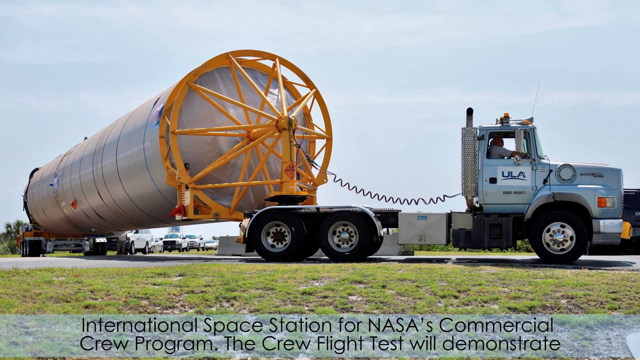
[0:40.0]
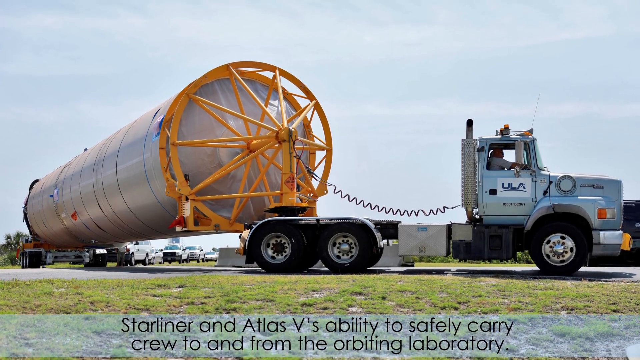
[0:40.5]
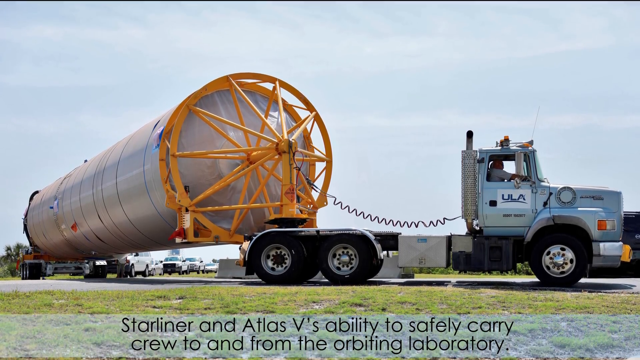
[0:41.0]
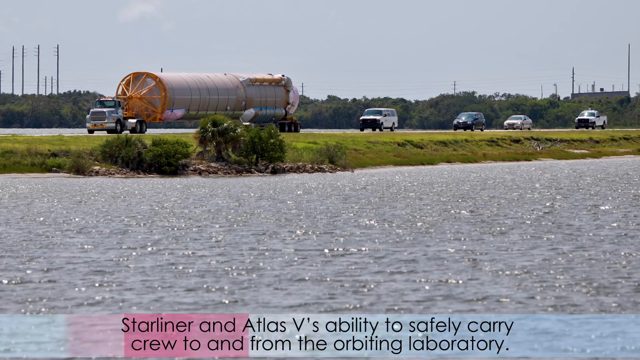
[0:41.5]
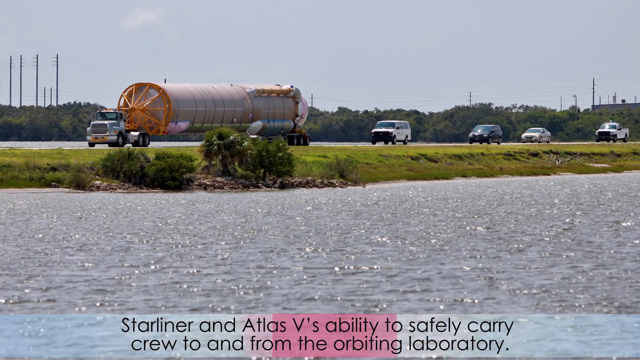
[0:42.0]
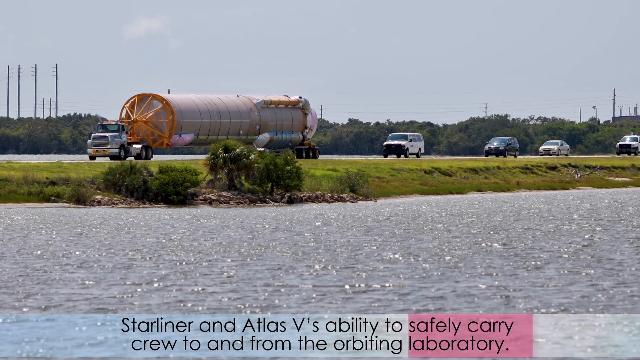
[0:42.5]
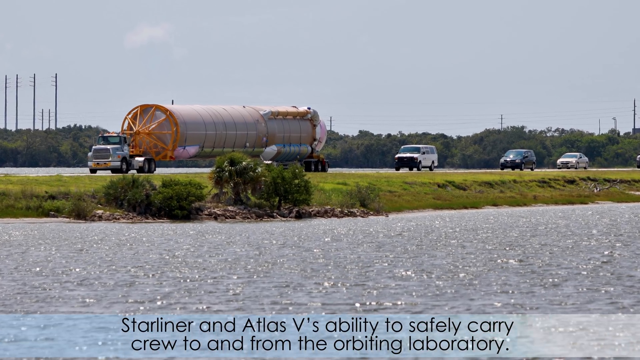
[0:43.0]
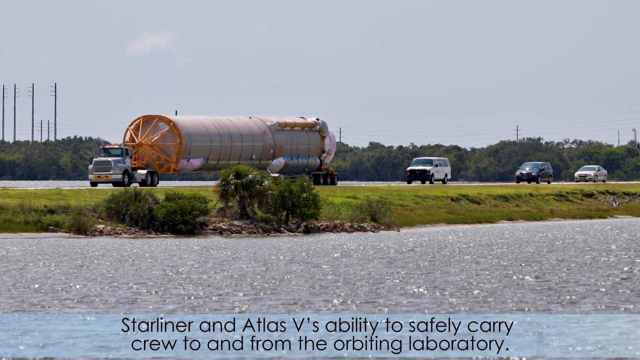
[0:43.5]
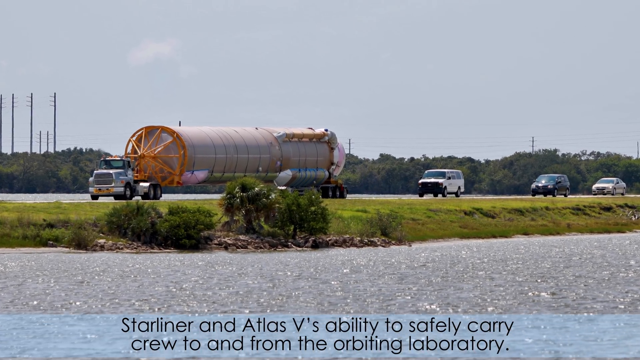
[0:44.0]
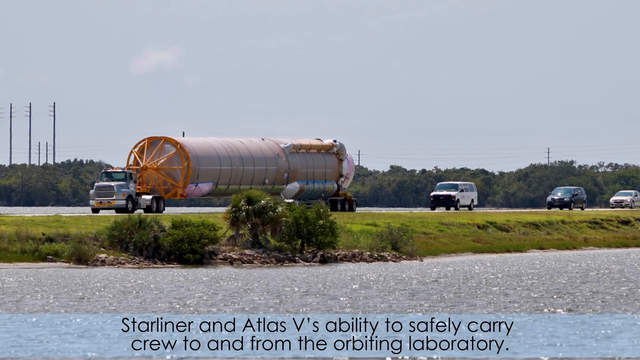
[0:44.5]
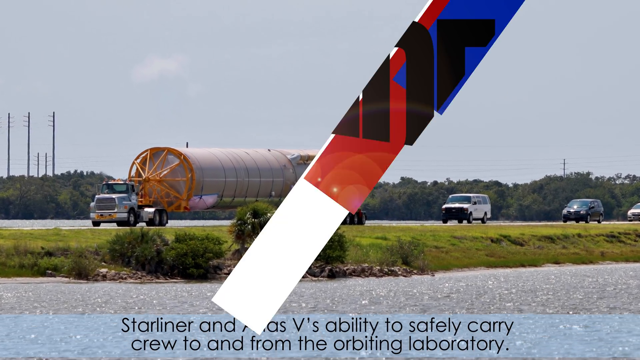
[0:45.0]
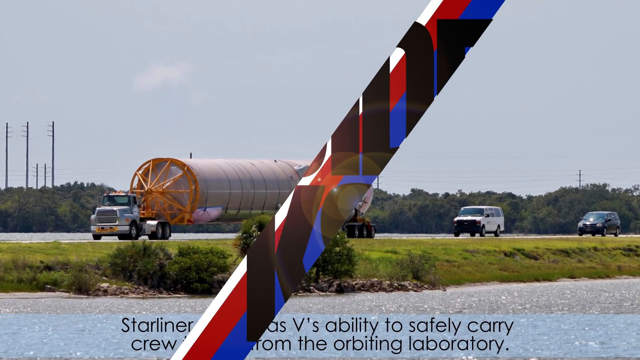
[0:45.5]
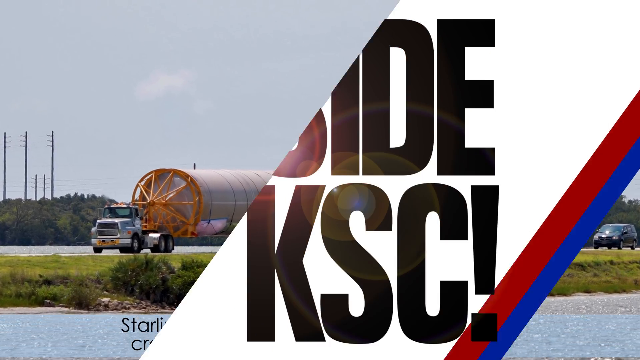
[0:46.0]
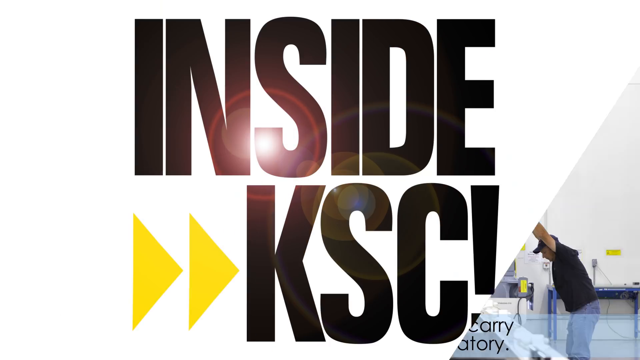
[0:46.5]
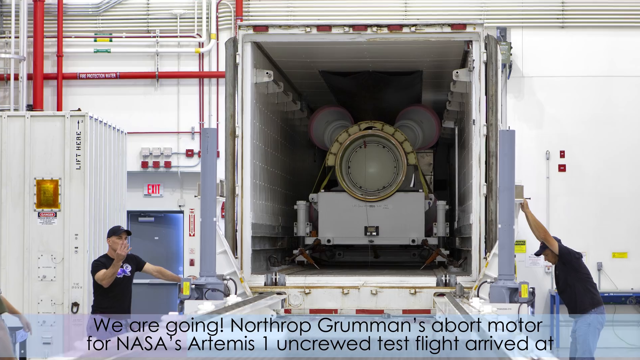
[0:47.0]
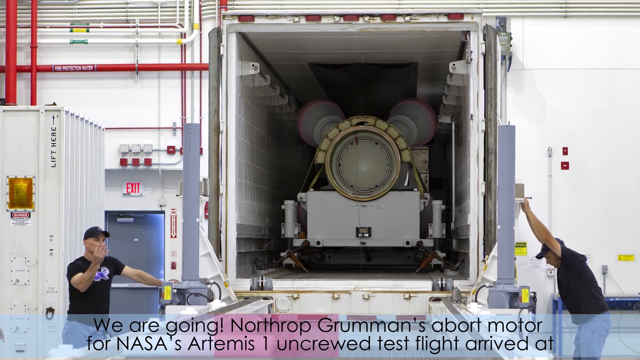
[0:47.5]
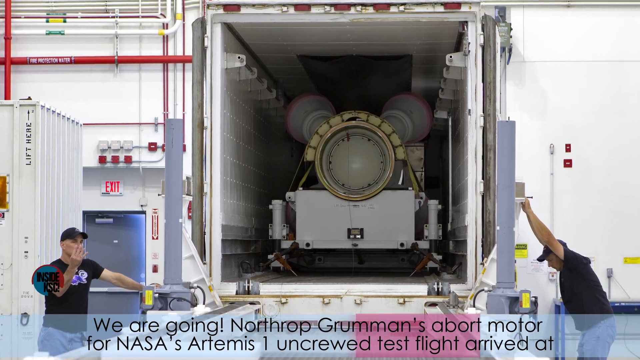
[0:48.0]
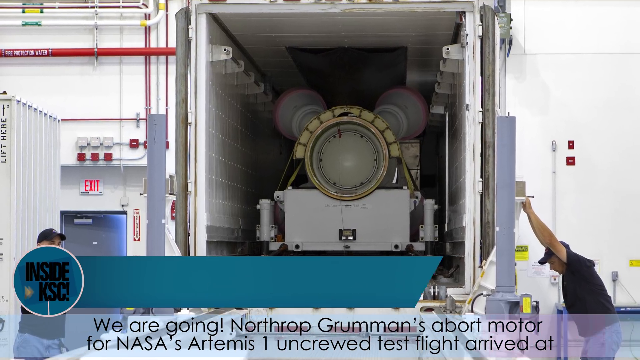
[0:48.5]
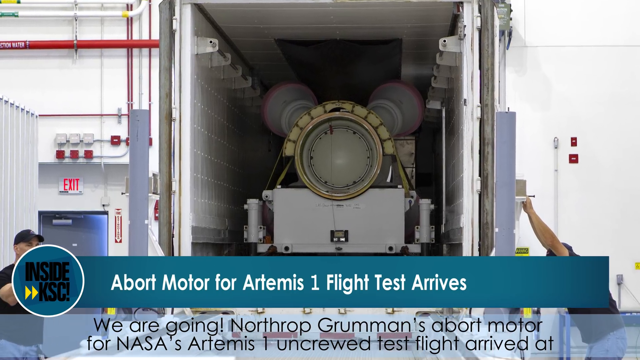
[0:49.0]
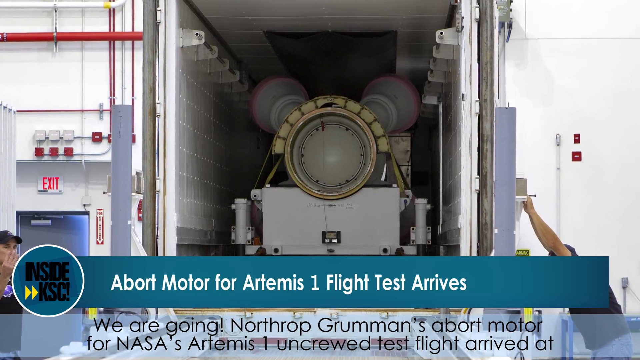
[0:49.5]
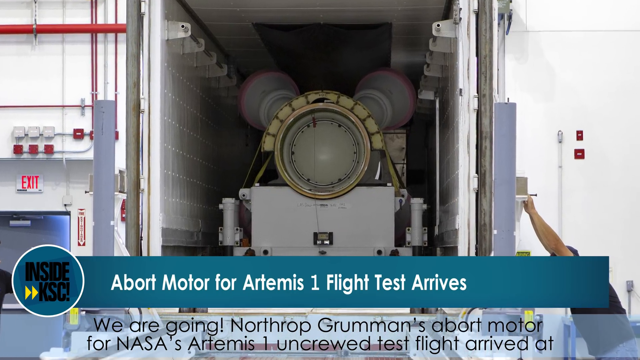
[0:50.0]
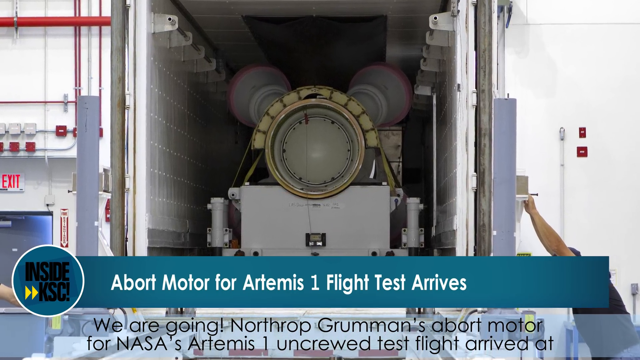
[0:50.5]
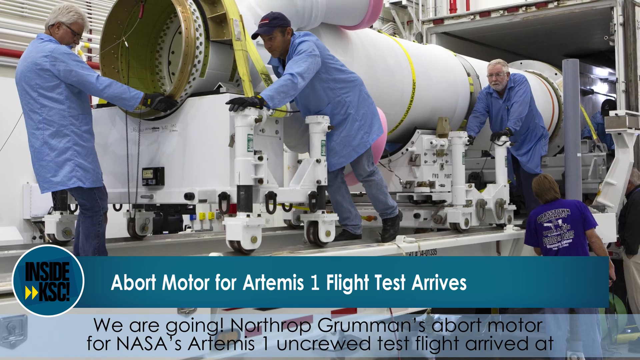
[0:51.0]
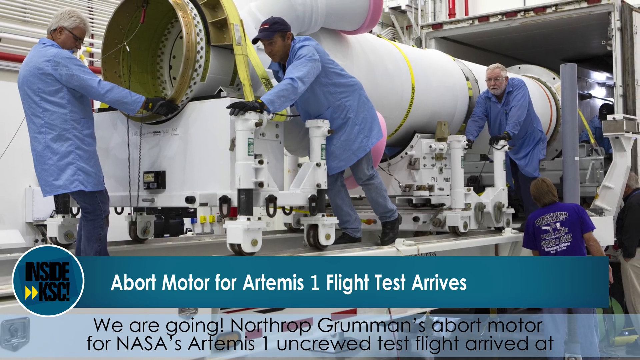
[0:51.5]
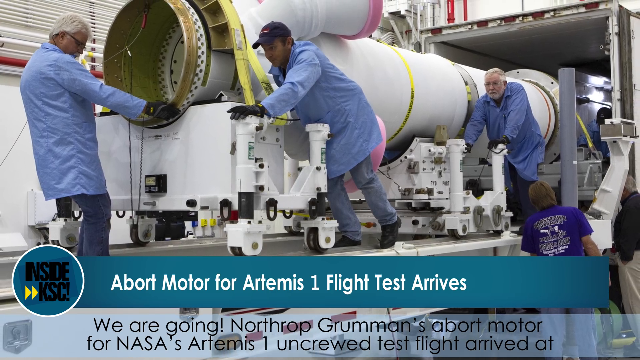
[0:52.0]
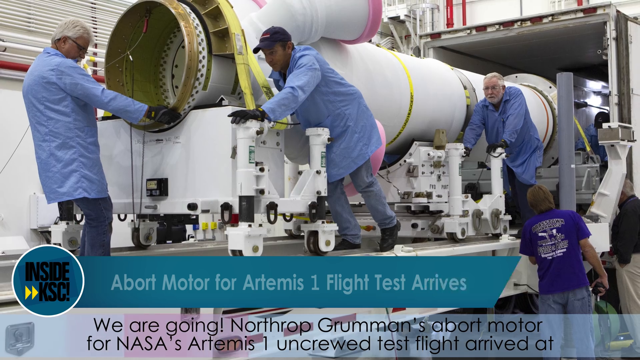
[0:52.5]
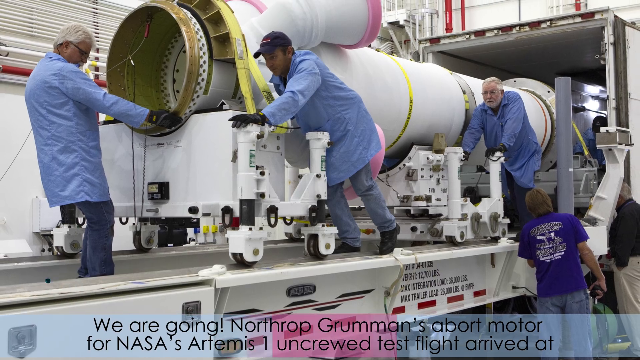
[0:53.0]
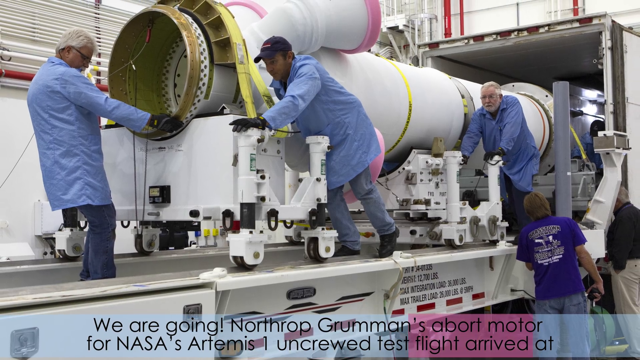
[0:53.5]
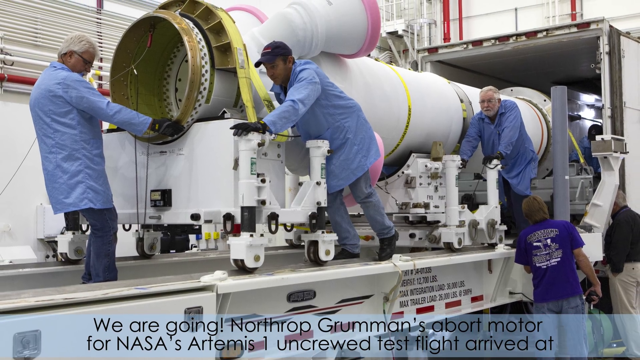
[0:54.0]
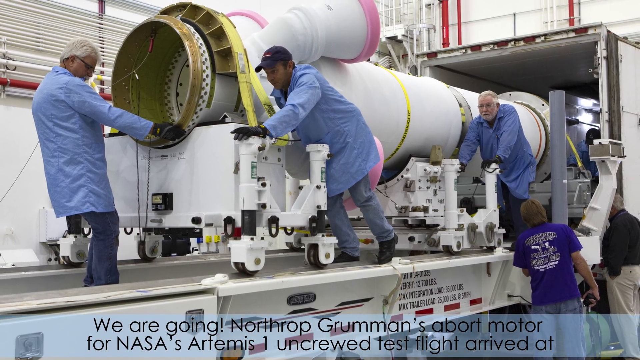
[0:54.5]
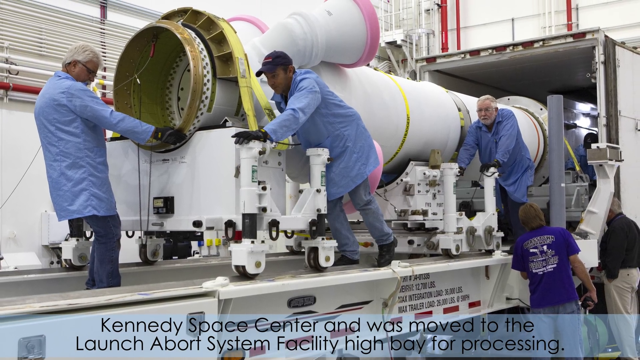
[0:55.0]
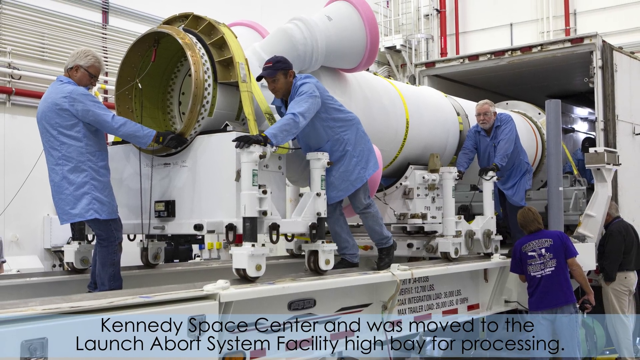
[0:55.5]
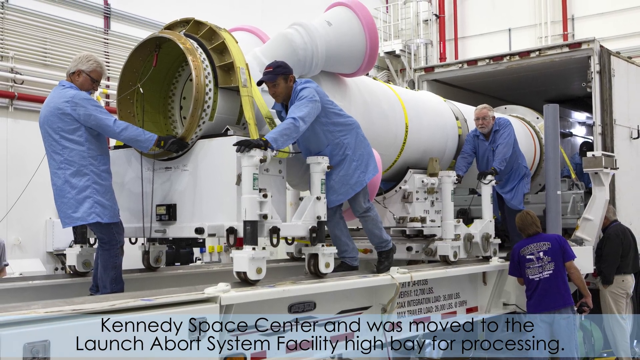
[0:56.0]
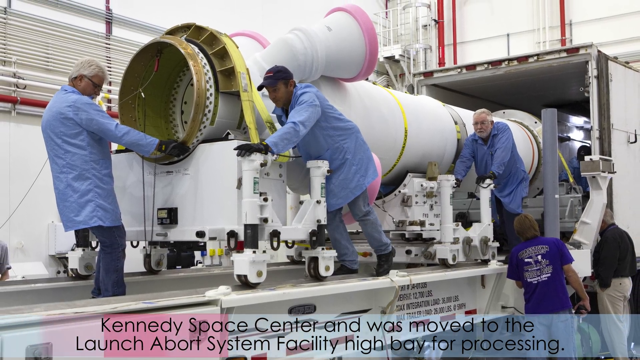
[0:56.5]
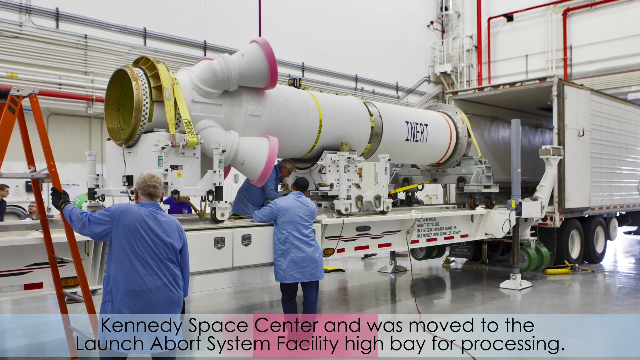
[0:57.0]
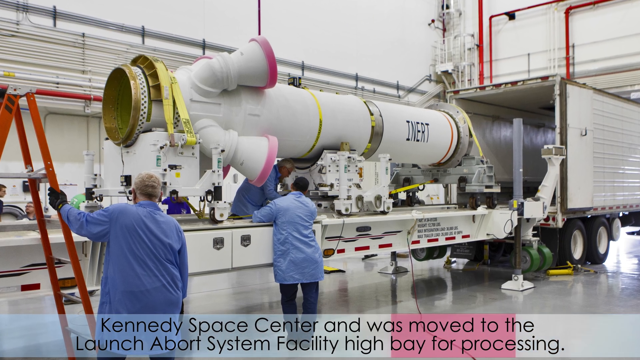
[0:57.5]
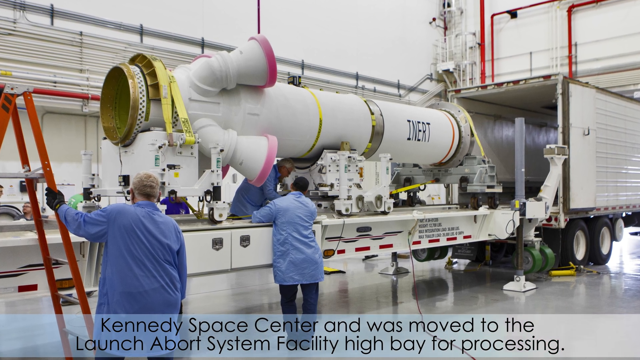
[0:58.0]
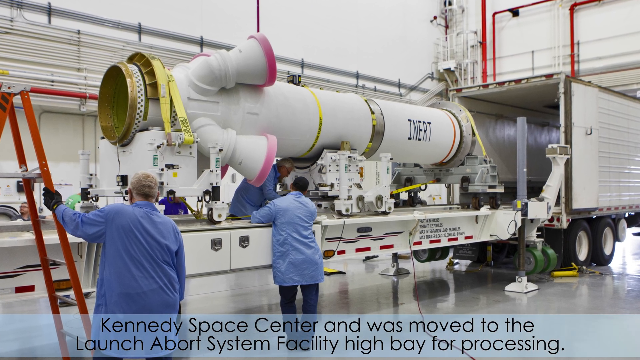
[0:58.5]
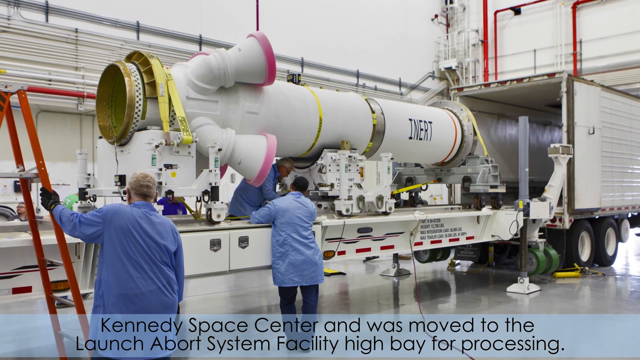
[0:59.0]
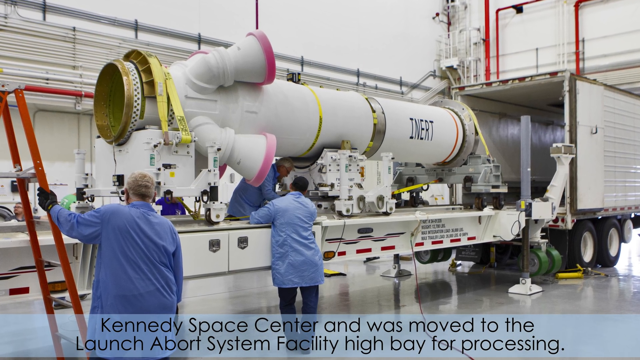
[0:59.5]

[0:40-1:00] Another photograph shows the booster rocket being transported by a truck cab of the kind that normally pulls an 18-wheeler. A lake or pond is in the foreground, and on a highway on the far side the truck has the booster rocket in tow behind it; the view zooms in on the booster. A short video interlude then emerges from the upper left corner of the screen, reading "Inside KSC!" with the exclamation point after the C. Another photograph follows, hard to make out: two workmen outside a mostly white building seem to be opening a square entryway or door, with something inside it. Text appears below against a turquoise background: "Abort motor for Artemis 1 flight test arrives." The view zooms in close, and further pictures show what is apparently the motor: another long white tube, not nearly as big, its diameter perhaps four feet. Several men in long light blue jackets are pushing things around it, apparently trying to unload it onto a flatbed. These are photographs, and the camera is always moving a bit. A closer look shows the motor as a long white tube with sort of arms sticking out of it that have pink rims around their edges and end in circles. On the side of the tube is the word "INERT" in all caps.